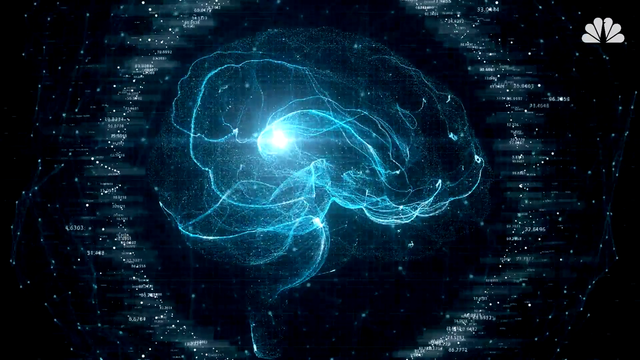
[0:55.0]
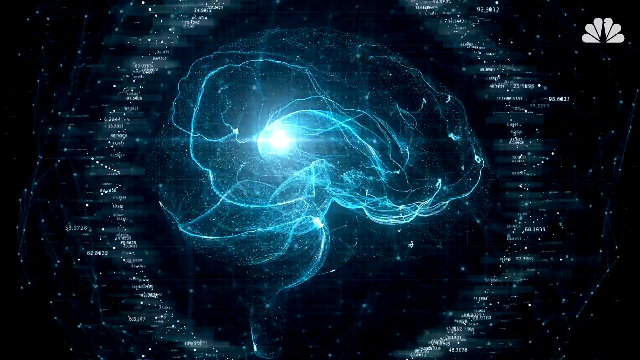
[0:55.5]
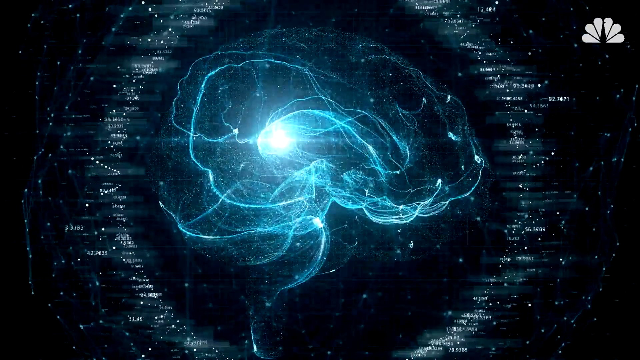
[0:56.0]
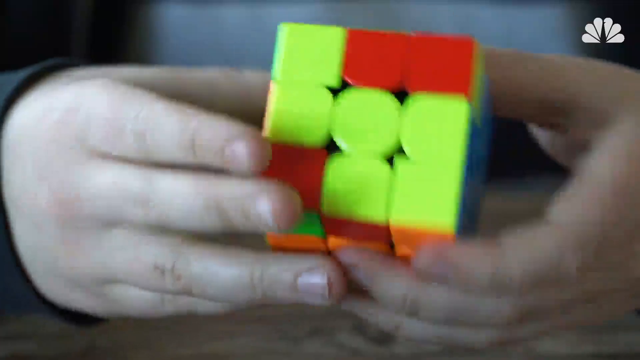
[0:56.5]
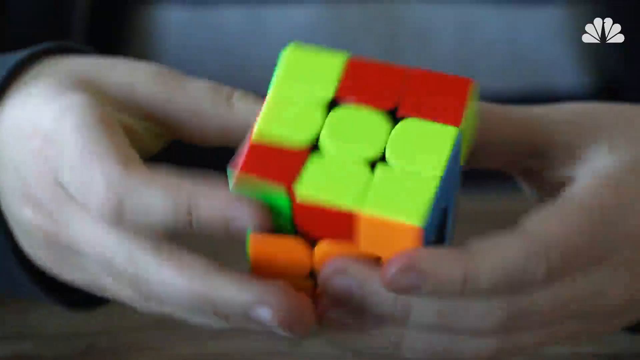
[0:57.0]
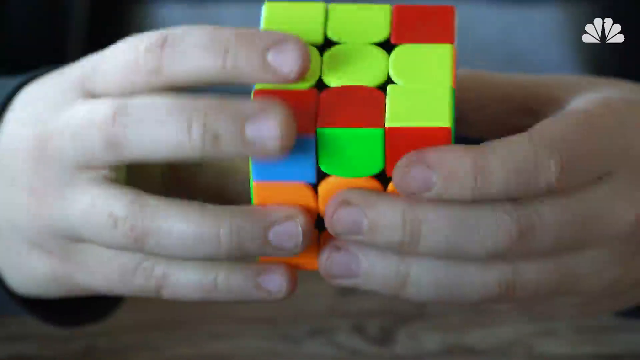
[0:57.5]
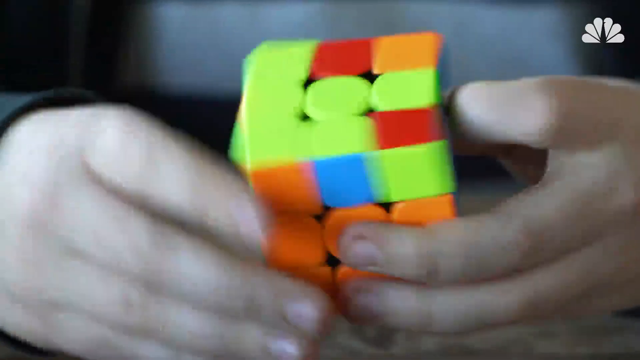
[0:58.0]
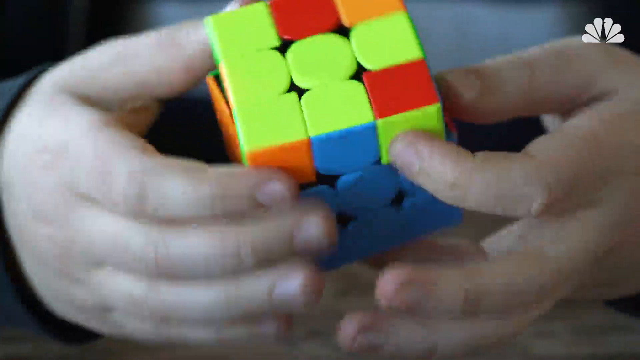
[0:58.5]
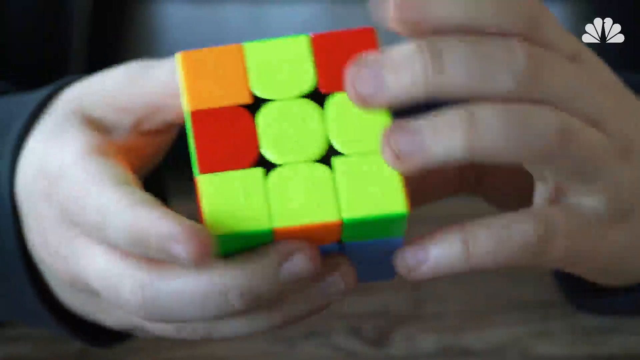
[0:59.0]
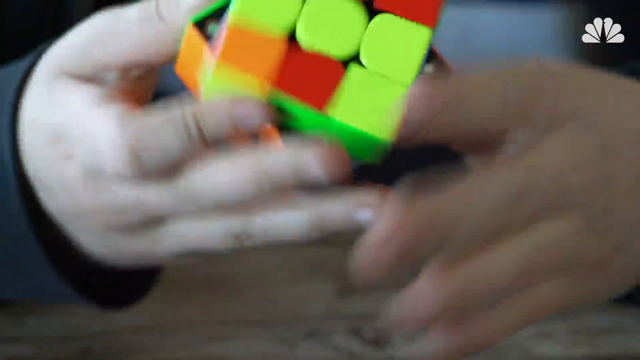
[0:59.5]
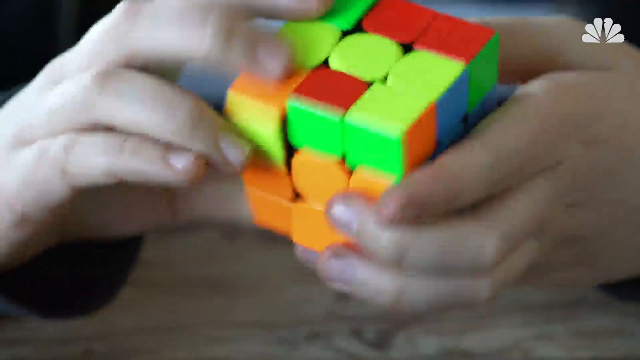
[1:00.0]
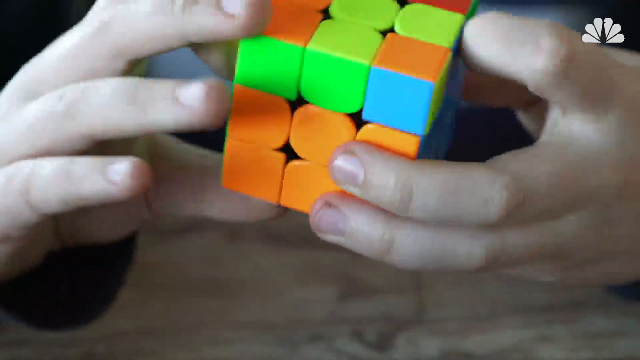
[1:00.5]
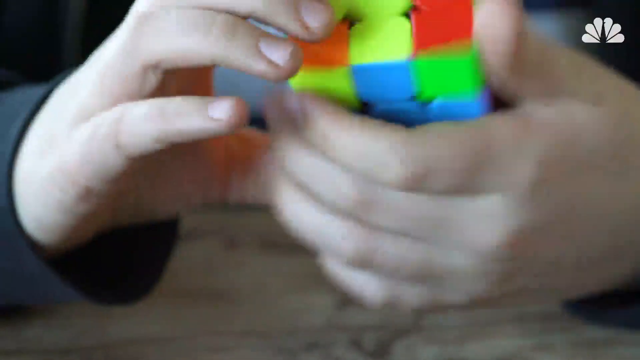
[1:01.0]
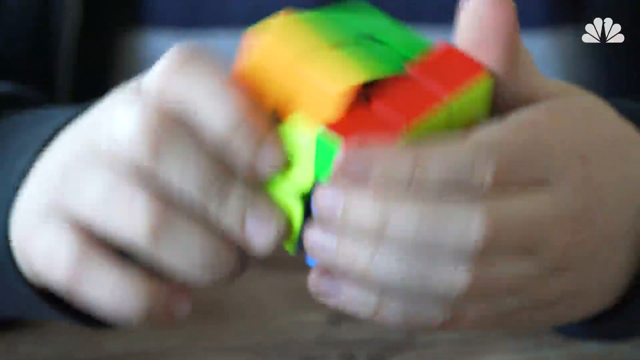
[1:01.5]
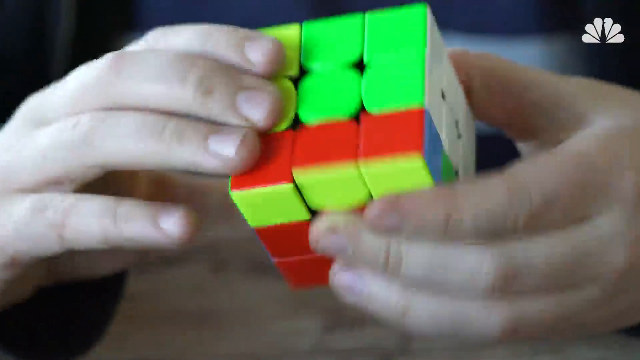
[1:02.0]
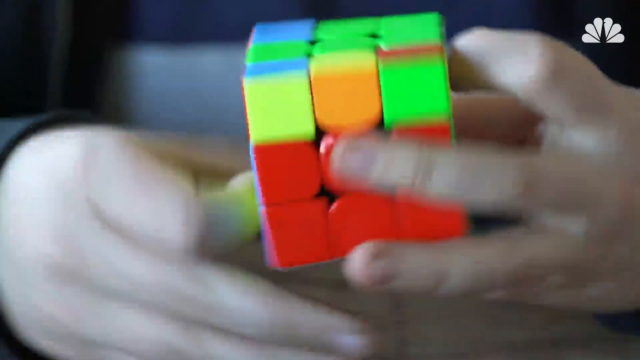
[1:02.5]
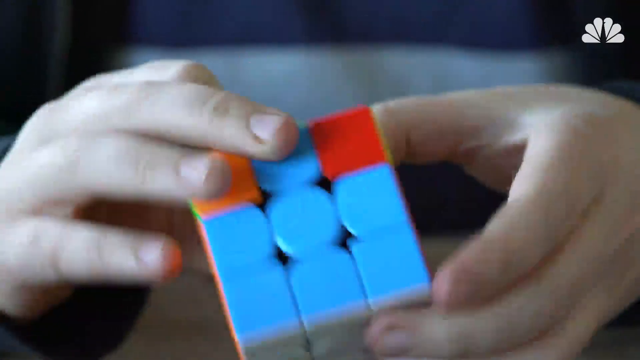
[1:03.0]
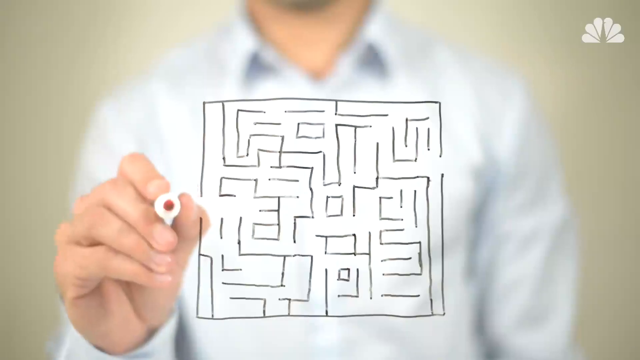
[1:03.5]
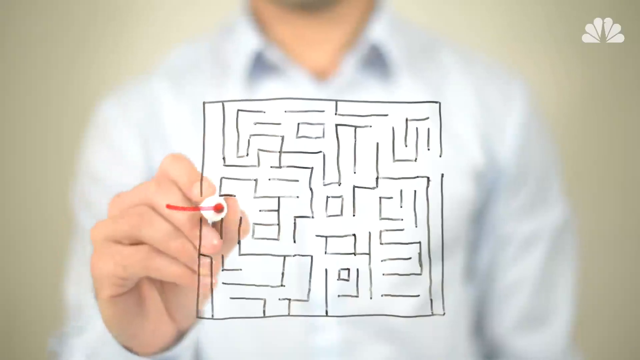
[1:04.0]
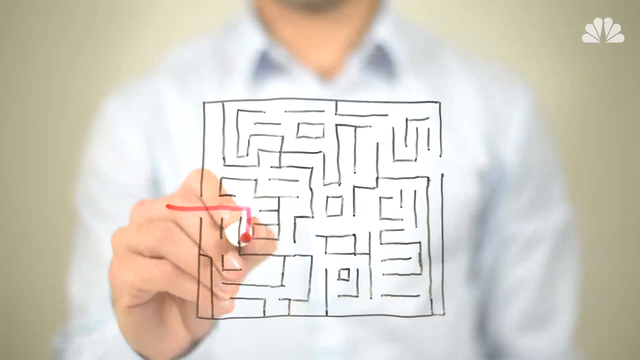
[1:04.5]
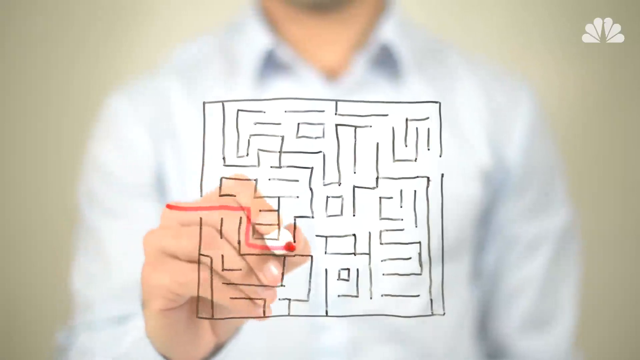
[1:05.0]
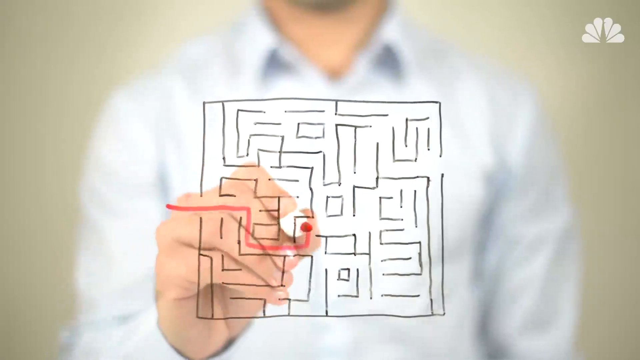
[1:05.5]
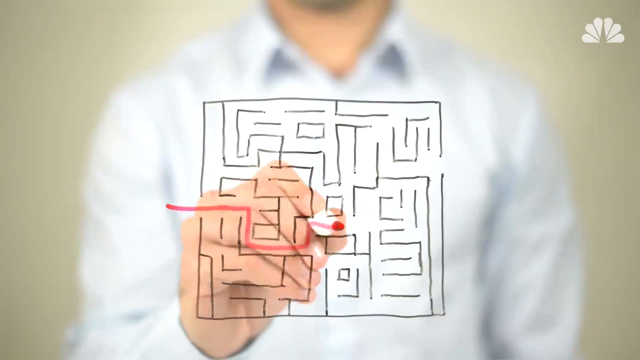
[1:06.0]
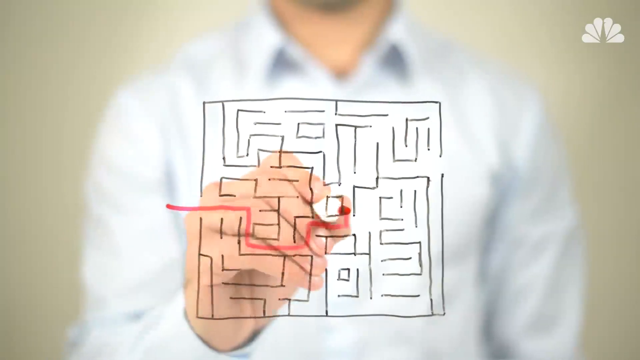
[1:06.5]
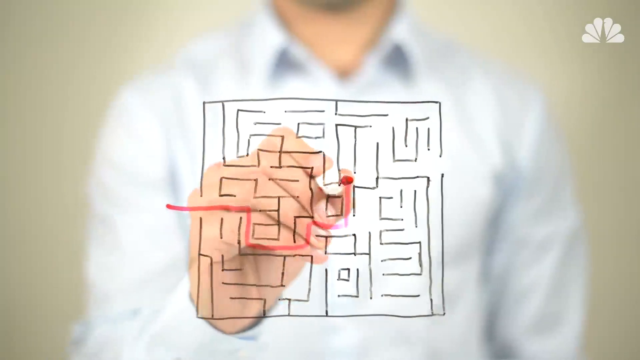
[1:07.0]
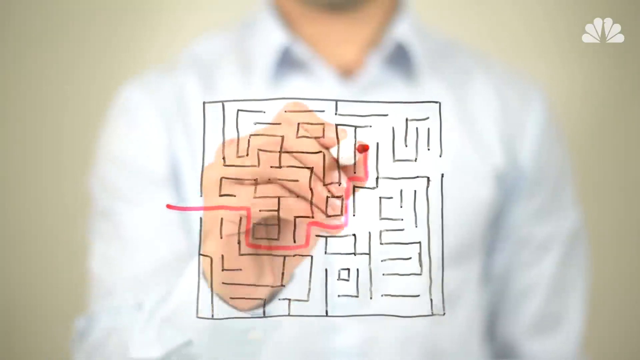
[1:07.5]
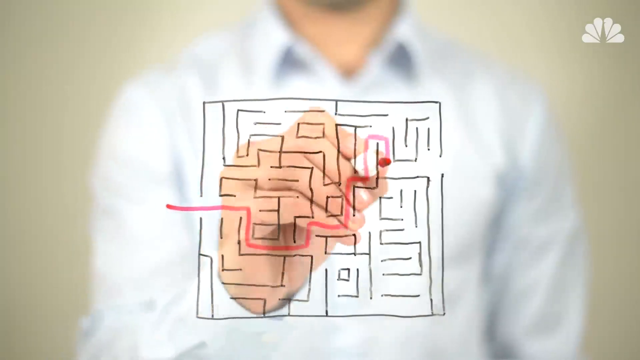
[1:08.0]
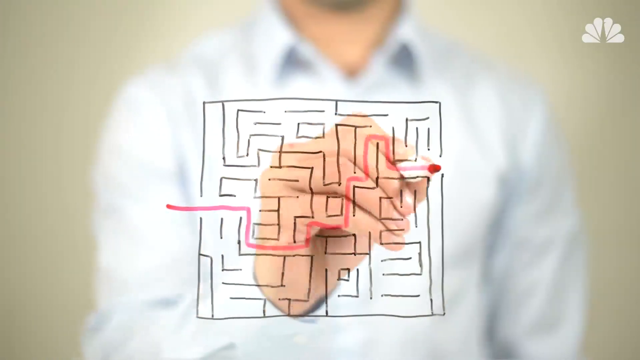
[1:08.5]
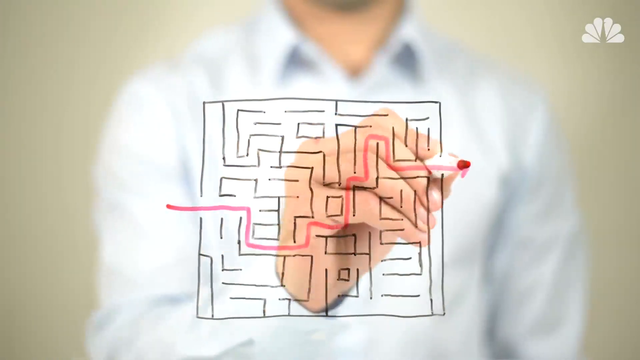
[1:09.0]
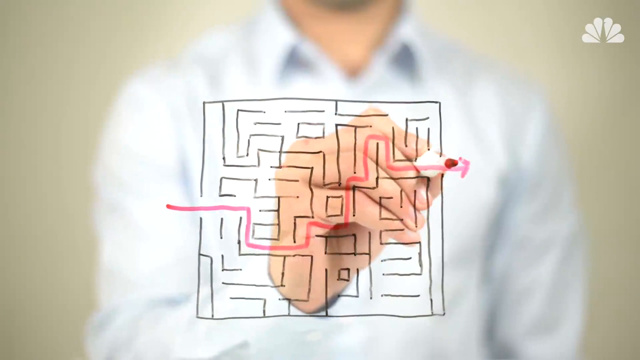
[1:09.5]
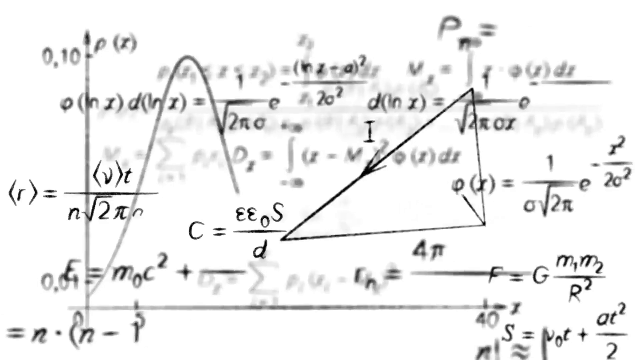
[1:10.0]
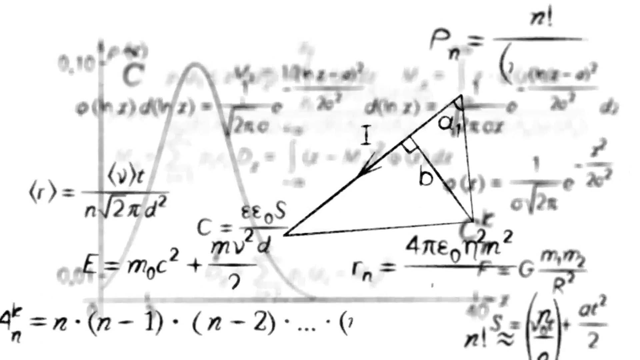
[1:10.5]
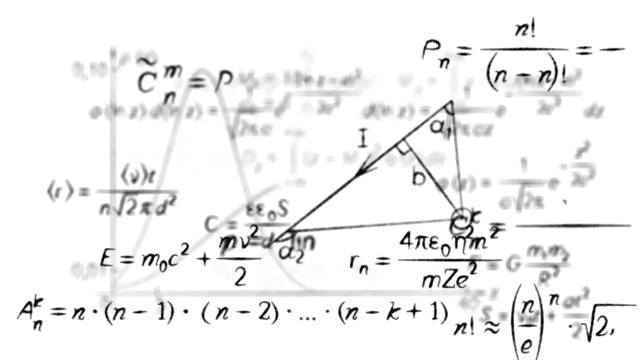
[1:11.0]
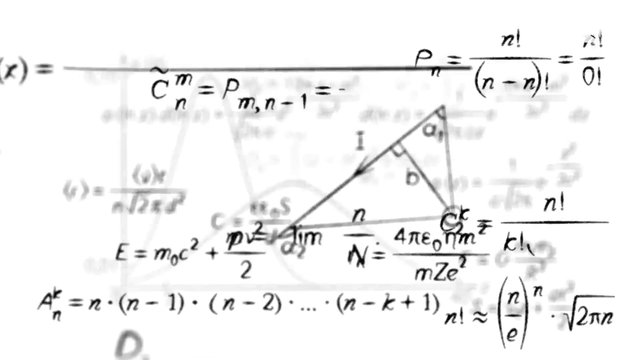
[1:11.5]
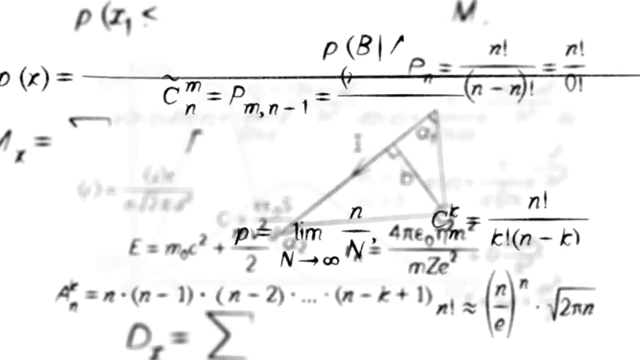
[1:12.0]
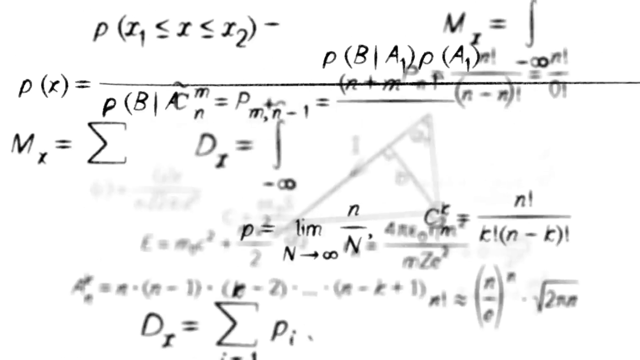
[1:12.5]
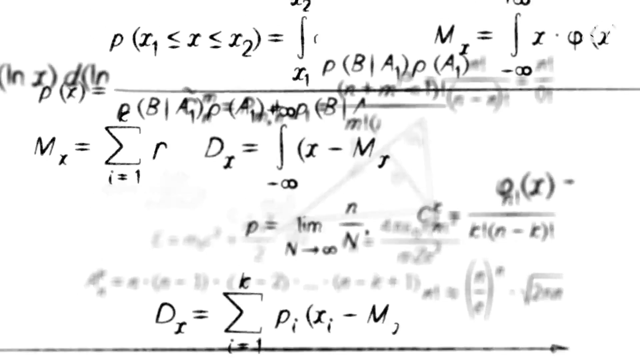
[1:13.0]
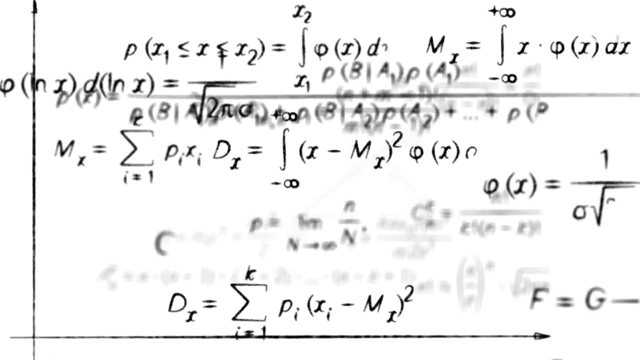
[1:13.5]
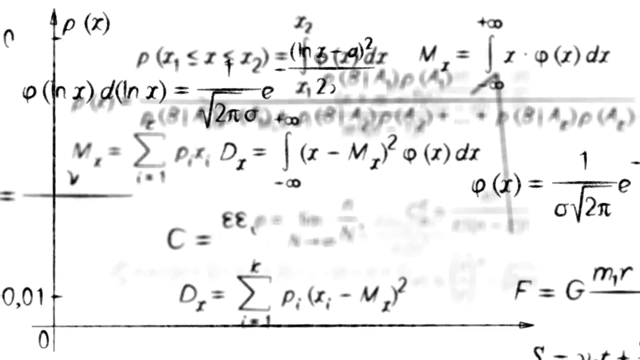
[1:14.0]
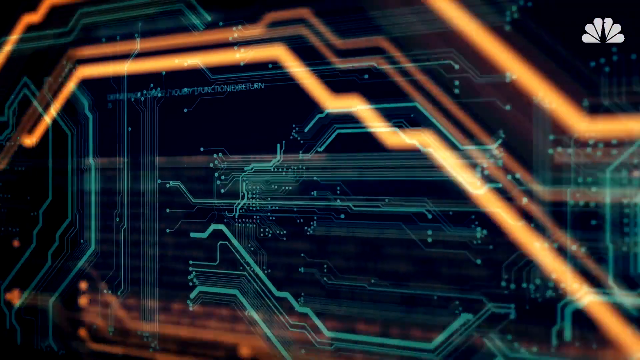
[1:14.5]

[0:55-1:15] After the tail end of the cosmic graphic, the video cuts to a close-up of someone's hands completing a Rubik's Cube with a different color scheme: instead of the primary colors it has light blue, lighter oranges and lime green, with some squares and some circles on its surface. Next is a clear graphic of a man in a white shirt using a red pen to draw his way through a black maze already on clear glass, almost as if there were a window in front of him; the background behind him is fuzzy. The video then shows a white background with lots of black angles, math formulas and numbers, with many lines moving as the view pans out.